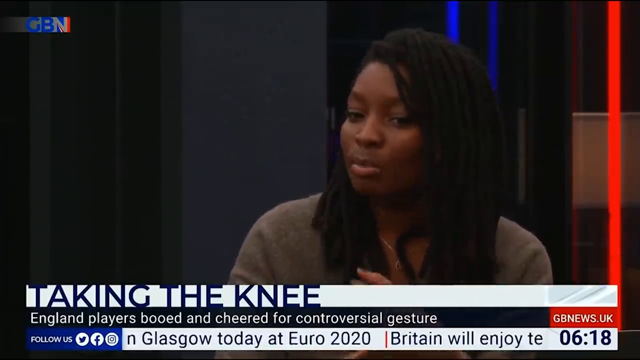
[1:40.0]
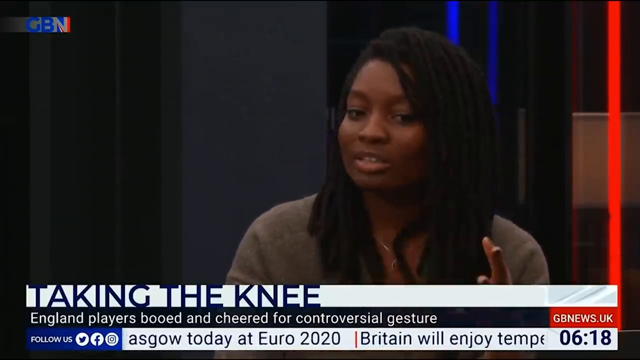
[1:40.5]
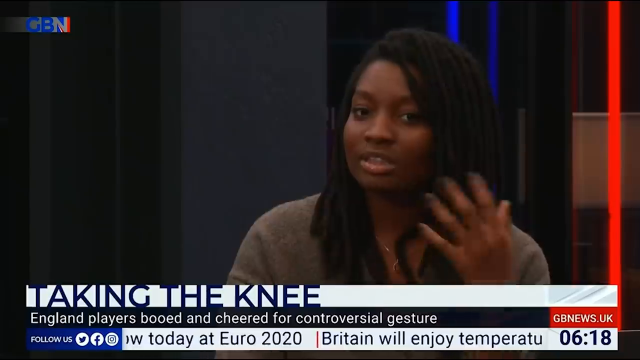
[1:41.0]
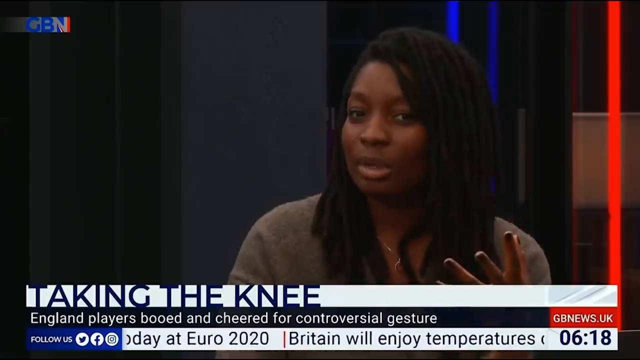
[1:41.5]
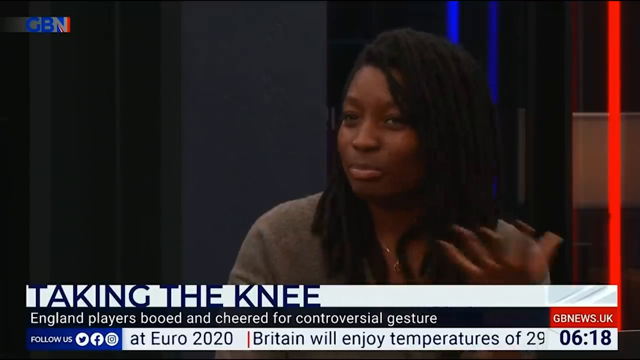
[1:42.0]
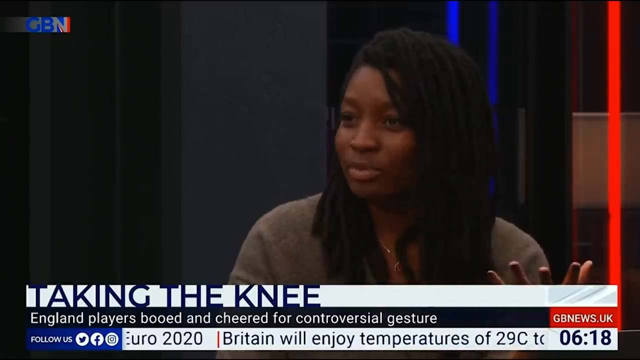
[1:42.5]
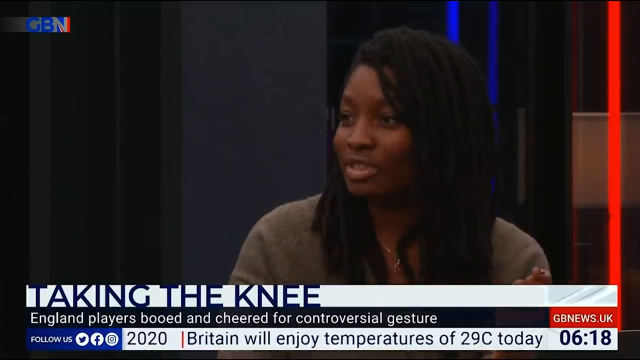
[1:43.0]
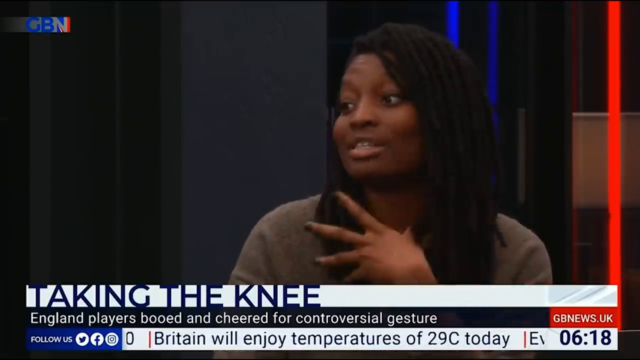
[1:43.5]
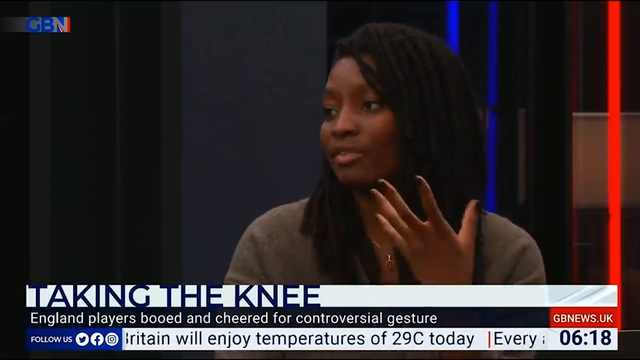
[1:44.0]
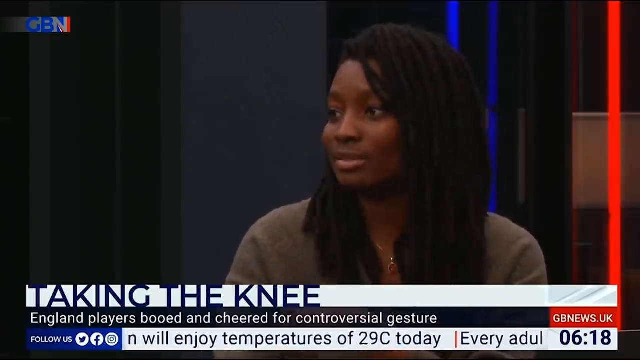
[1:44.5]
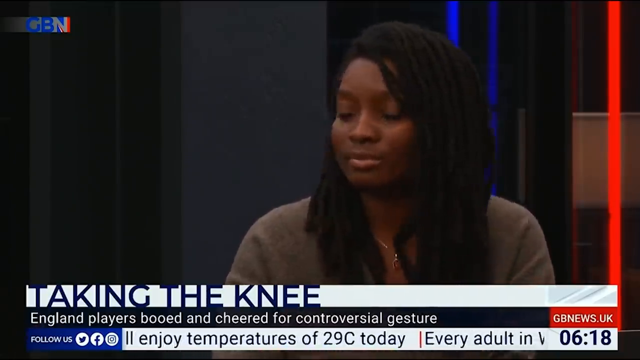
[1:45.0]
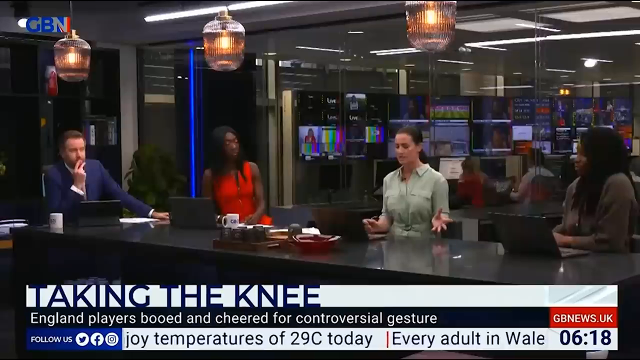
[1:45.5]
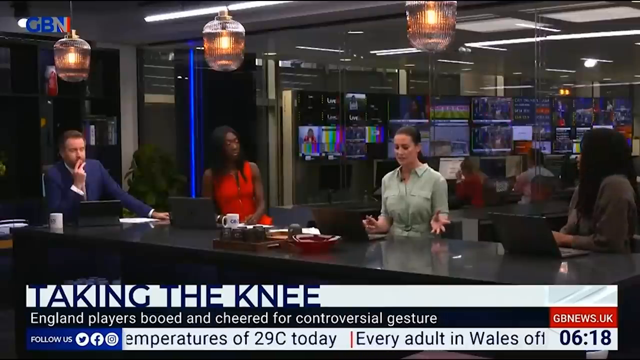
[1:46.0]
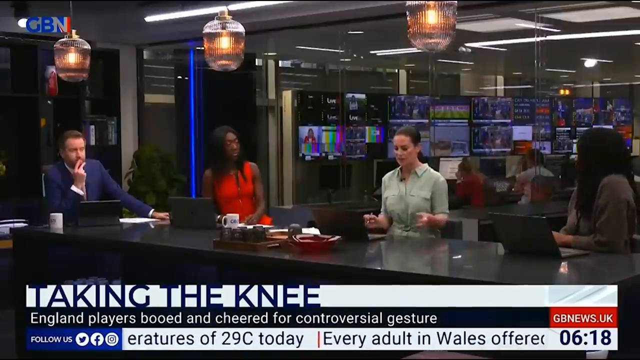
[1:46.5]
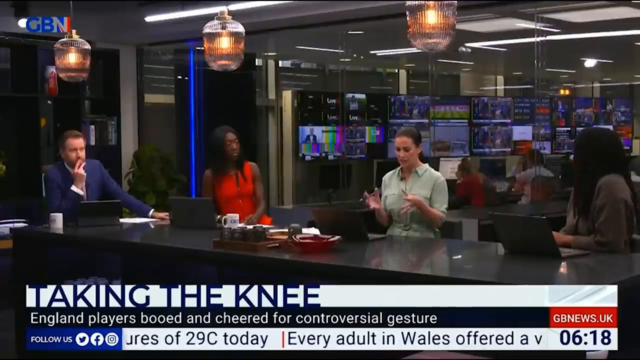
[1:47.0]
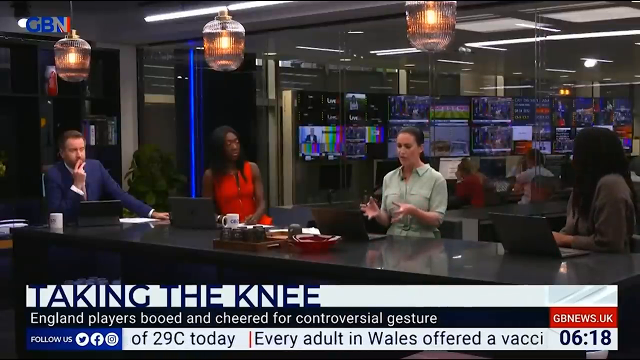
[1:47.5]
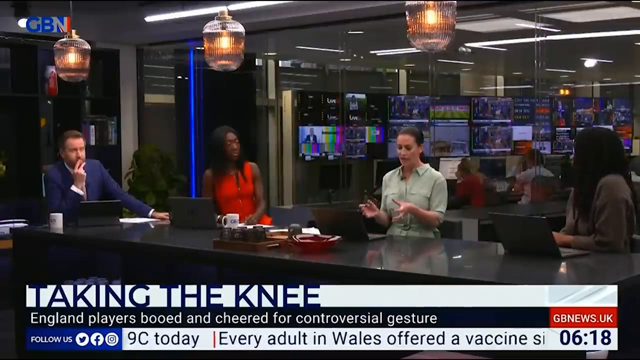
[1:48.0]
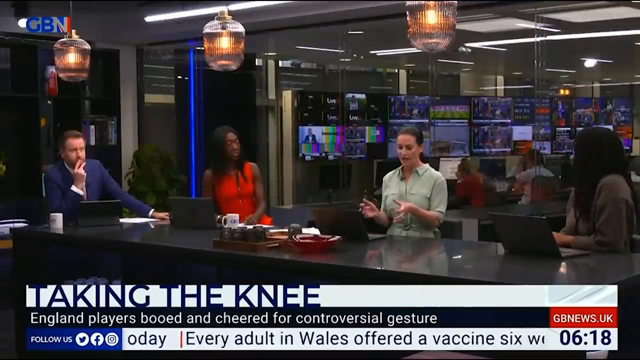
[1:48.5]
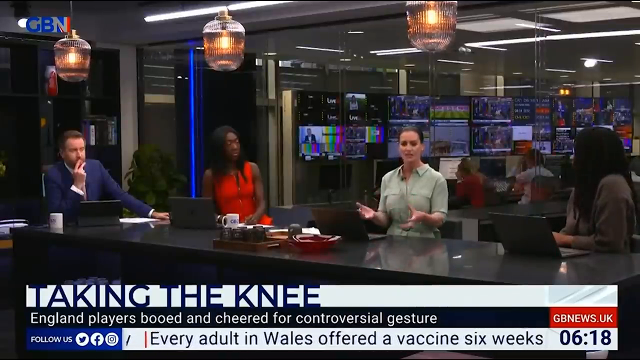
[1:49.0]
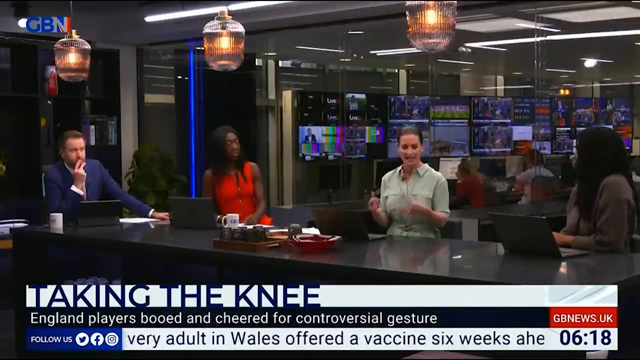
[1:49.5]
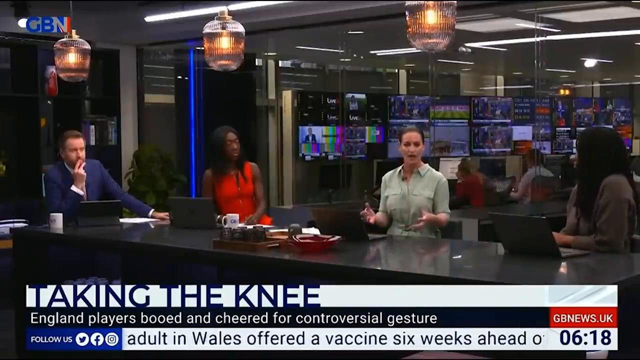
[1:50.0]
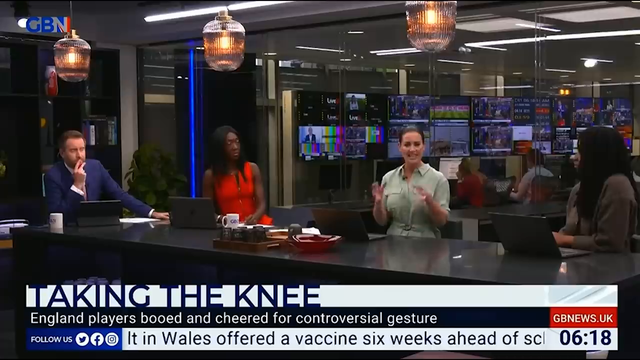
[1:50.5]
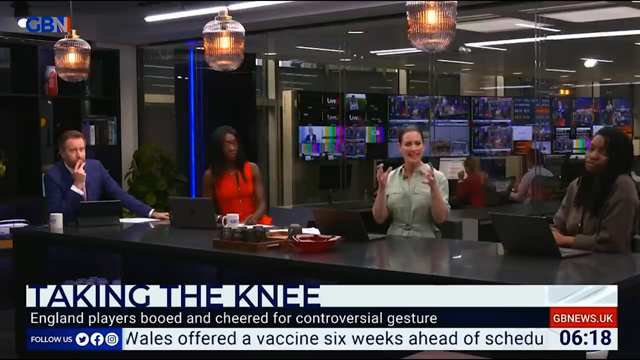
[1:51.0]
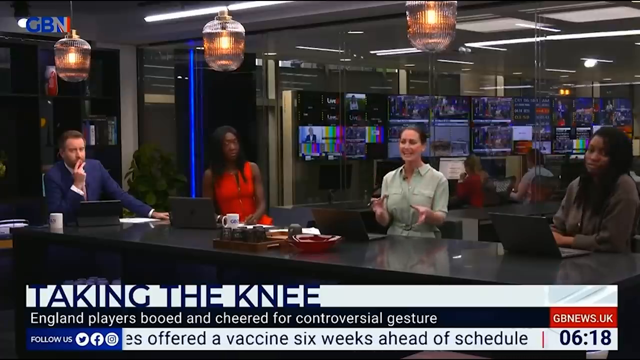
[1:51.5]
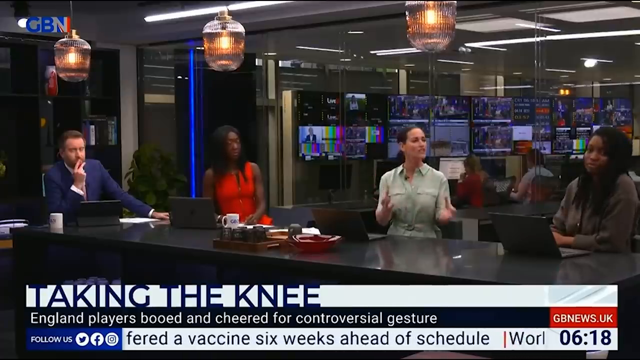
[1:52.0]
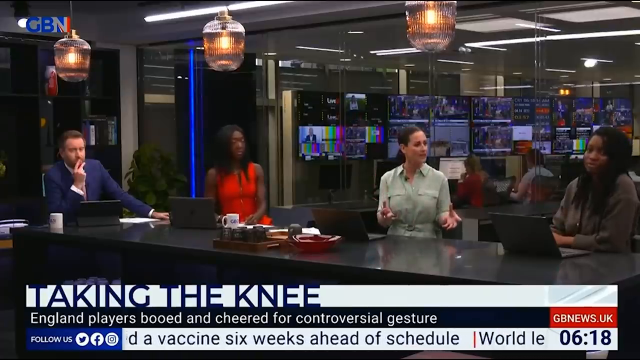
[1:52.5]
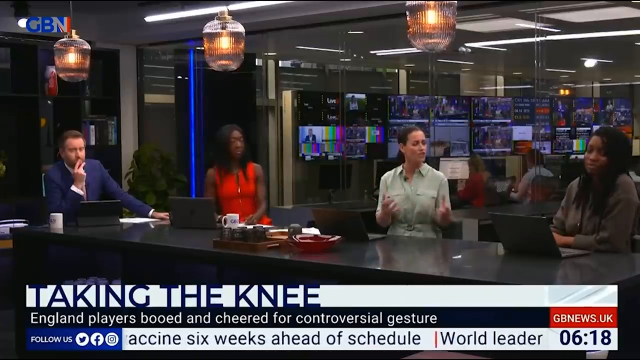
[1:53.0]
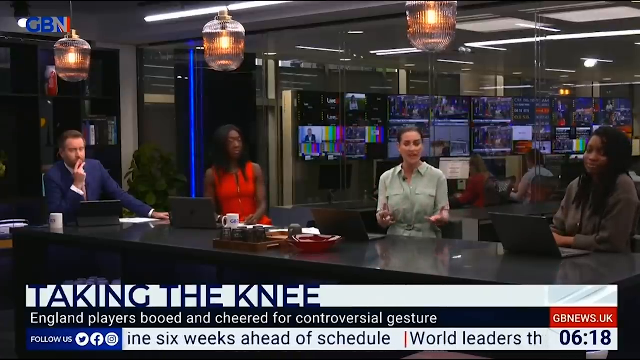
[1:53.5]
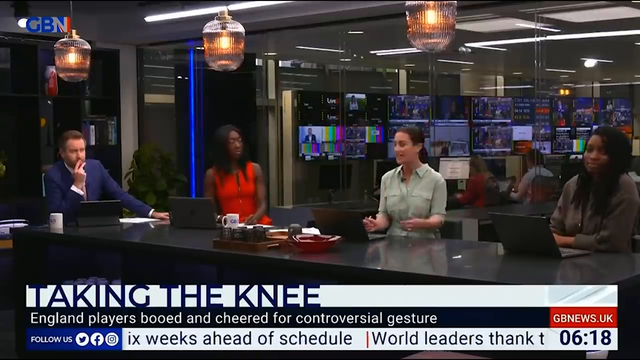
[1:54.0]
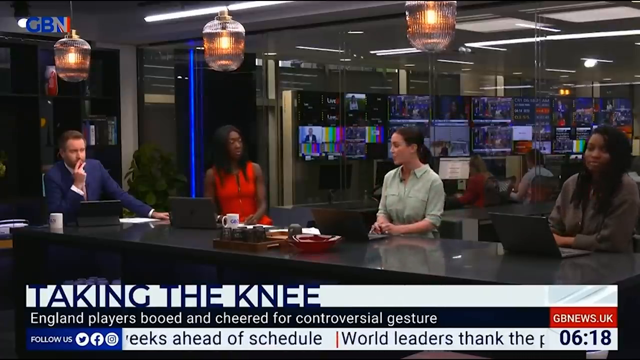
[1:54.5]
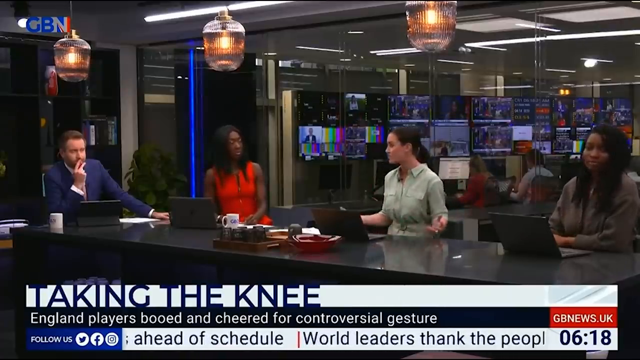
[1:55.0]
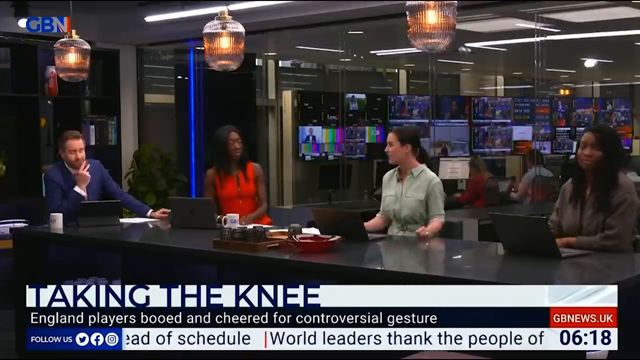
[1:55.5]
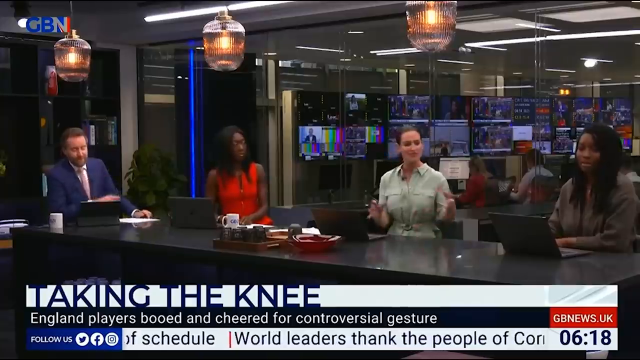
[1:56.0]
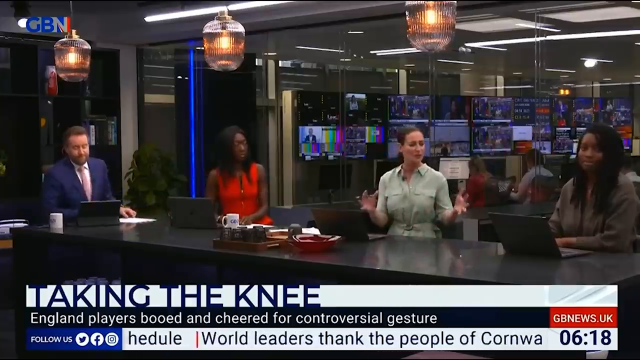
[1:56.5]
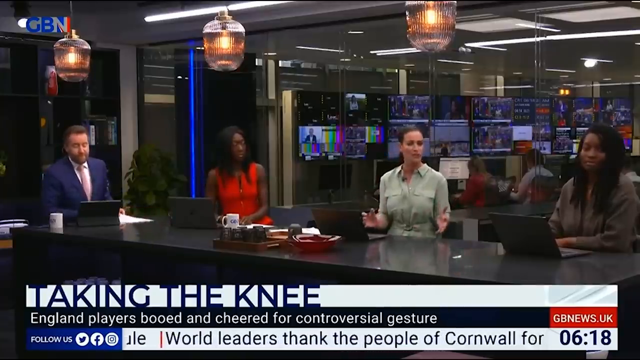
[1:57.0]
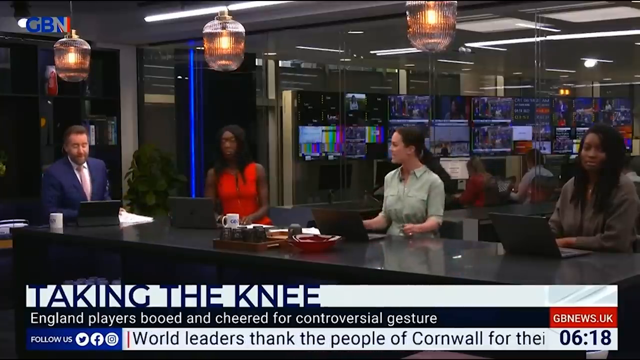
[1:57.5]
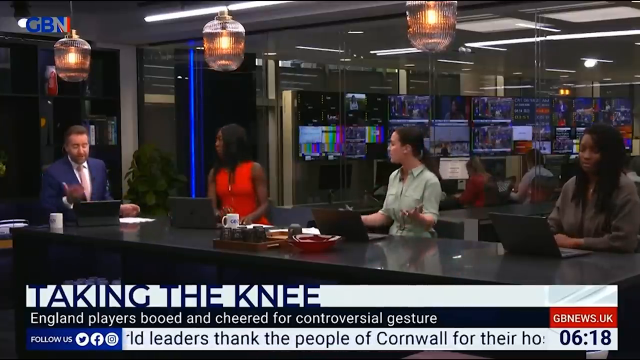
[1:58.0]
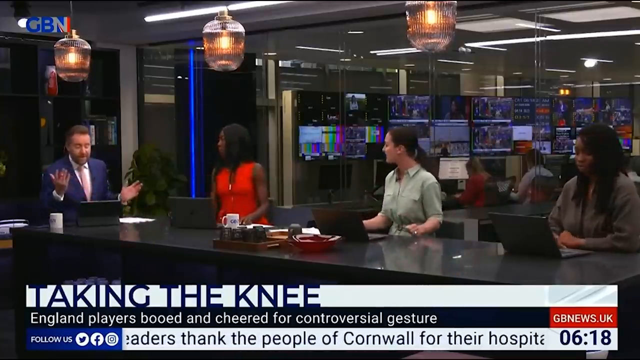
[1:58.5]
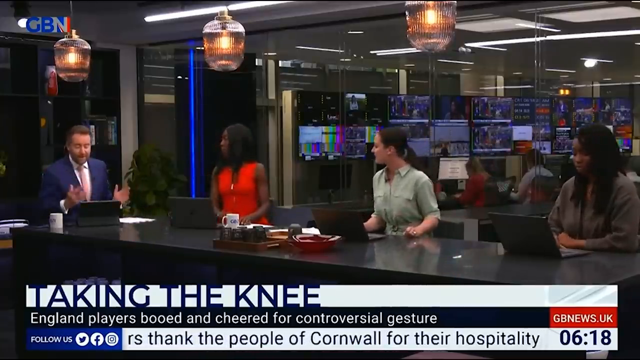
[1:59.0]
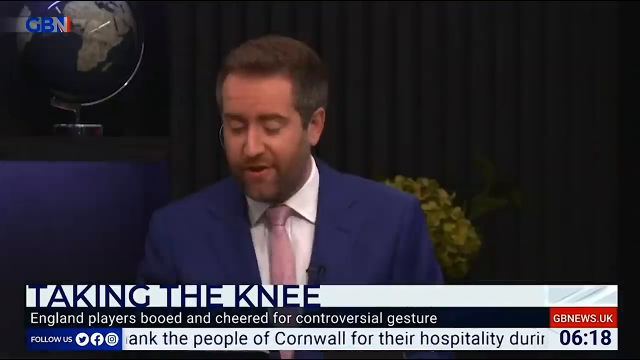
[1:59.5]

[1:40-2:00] An African-American woman in a brown sweater and a gold necklace is on the right side of the screen. At the bottom the text reads "taking the knee," and below it "England players booed and cheered for controversial gesture." She talks, holding her left hand up and waving it around with her palm facing the top of the screen, and shakes her head back and forth as she talks; then her fingers are extended with her palm facing her body. Her hand goes down and the camera zooms out to show all four people sitting around the table. The woman in the teal shirt talks with her hands out in front of her, holding a pen in her right hand. She holds her palms together, then palms up, shakes her hands around, and holds them apart with palms facing each other as she talks. She spreads her arms, holds her palms up toward the top of the screen, and looks to the left side of the screen, then again holds her hands apart with palms facing each other while talking. She looks toward the left side of the screen, and the man in the blue coat holds his hands up. The camera zooms in on him and he says something.